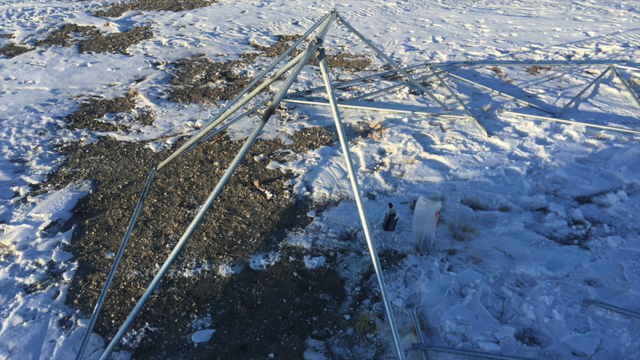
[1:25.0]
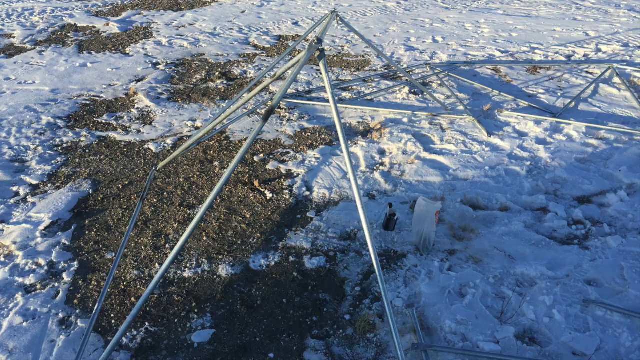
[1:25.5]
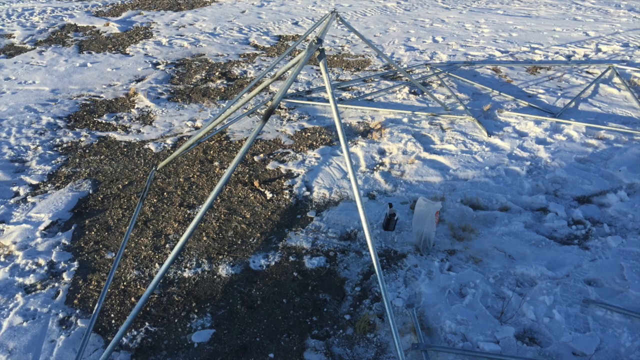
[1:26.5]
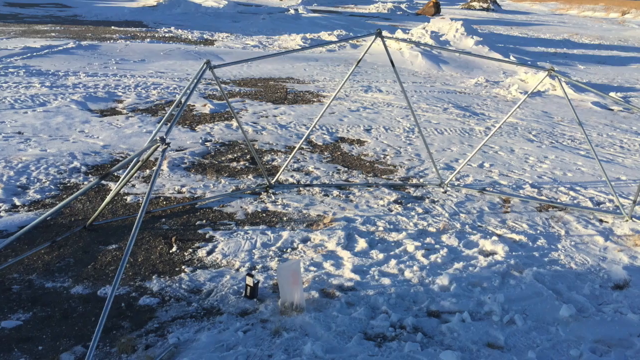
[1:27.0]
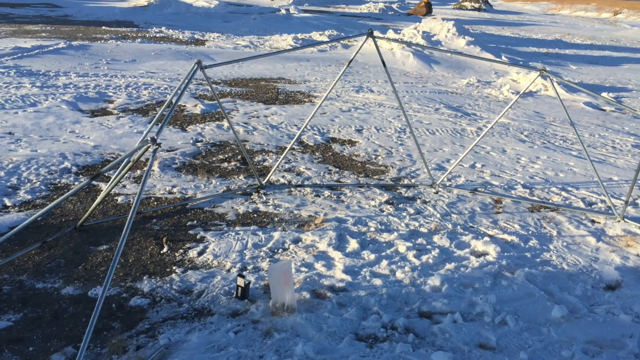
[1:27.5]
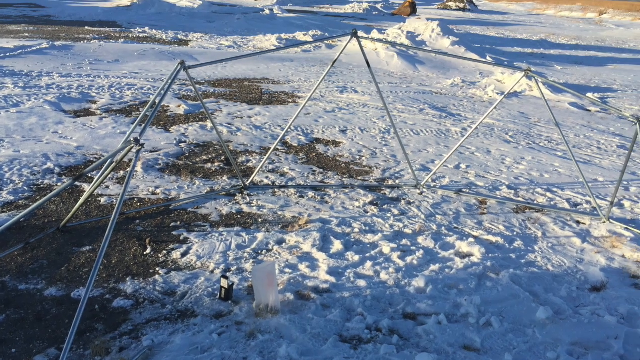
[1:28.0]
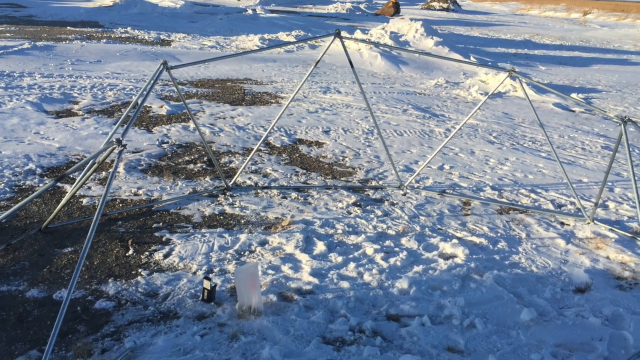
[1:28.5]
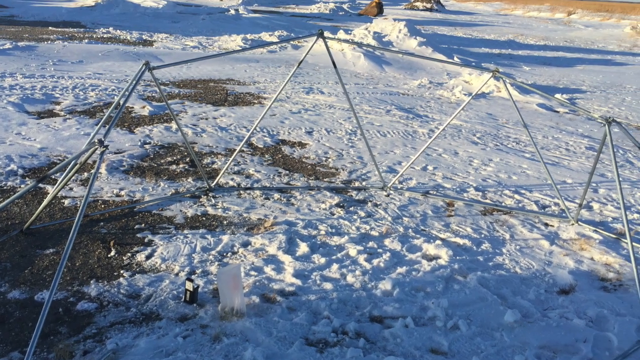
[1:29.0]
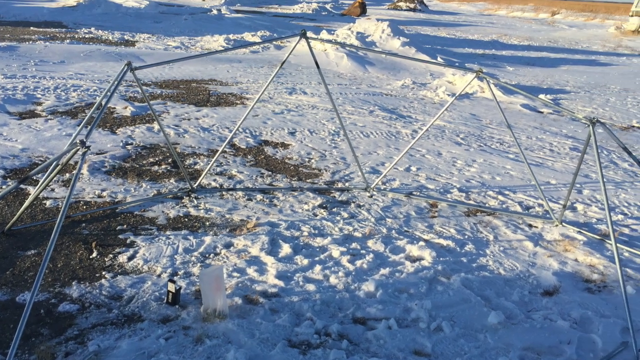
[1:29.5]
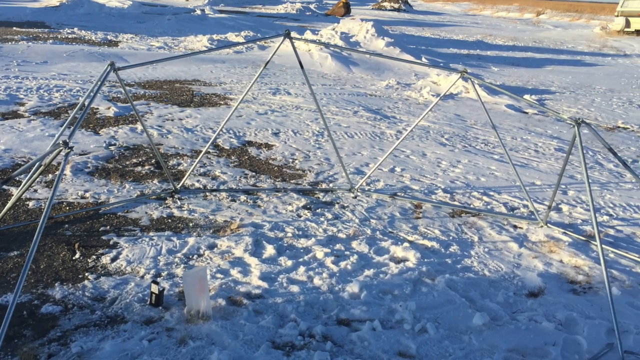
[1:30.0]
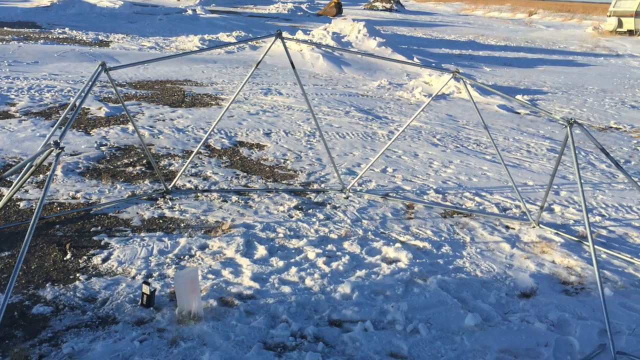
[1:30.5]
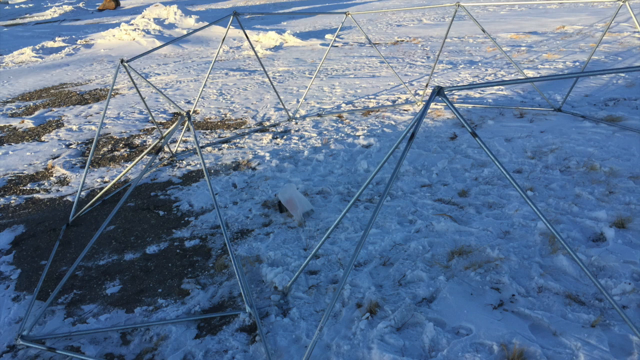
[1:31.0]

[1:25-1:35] The sides of the structure are starting to come together and are standing up. There is snow on the ground and it looks very cold outside; the time of day is unclear, possibly morning or evening. The poles are being attached to each other, slowly assembling the structure, which could be playground equipment or possibly a greenhouse. Boot prints in the snow indicate multiple people have been working on it.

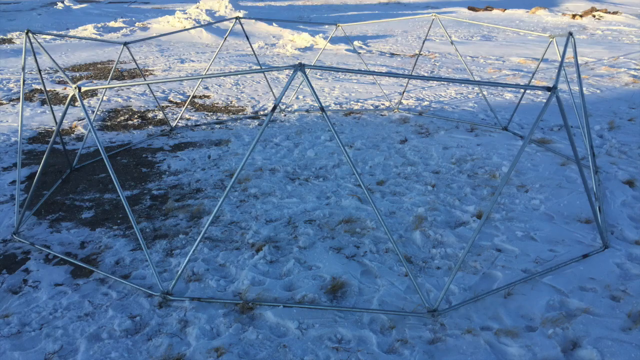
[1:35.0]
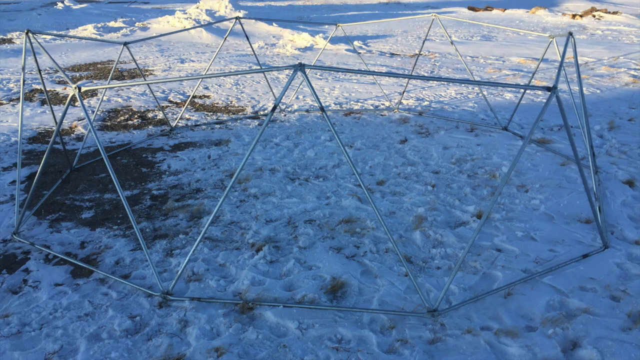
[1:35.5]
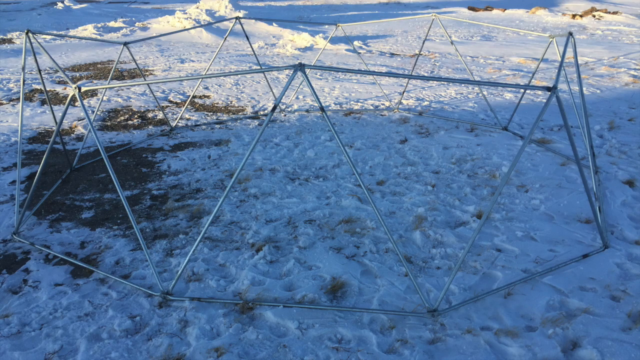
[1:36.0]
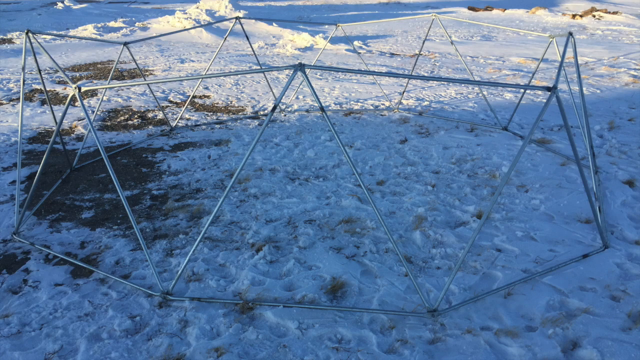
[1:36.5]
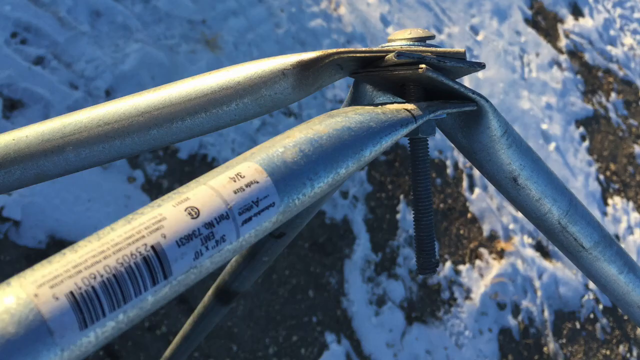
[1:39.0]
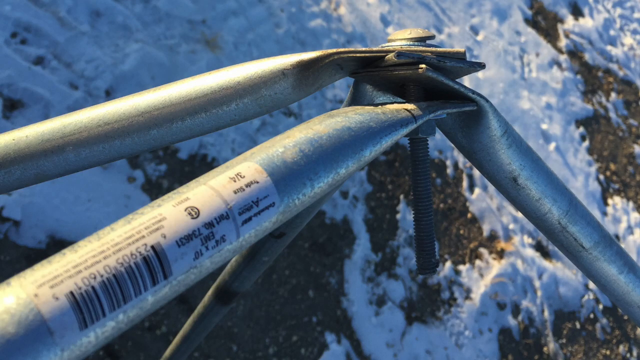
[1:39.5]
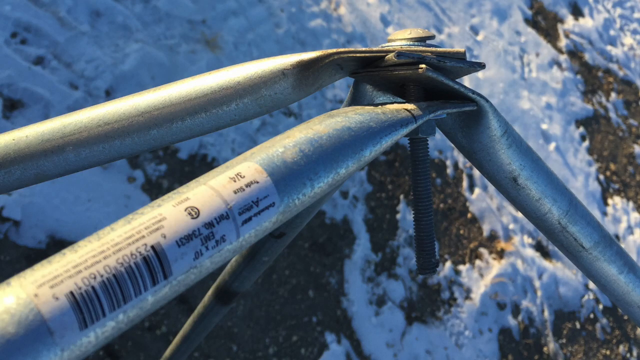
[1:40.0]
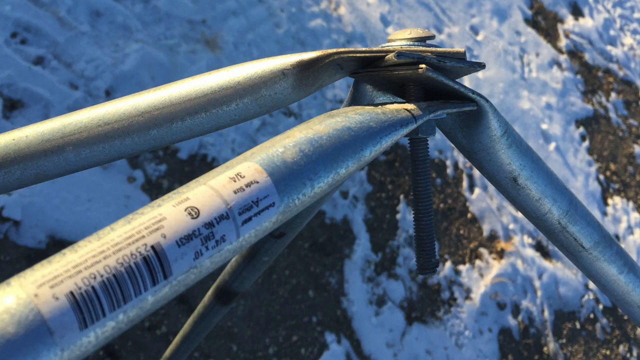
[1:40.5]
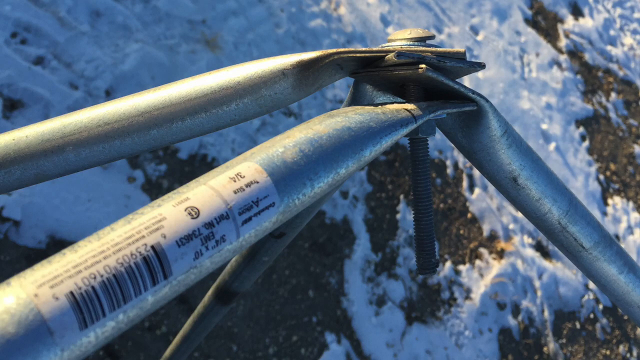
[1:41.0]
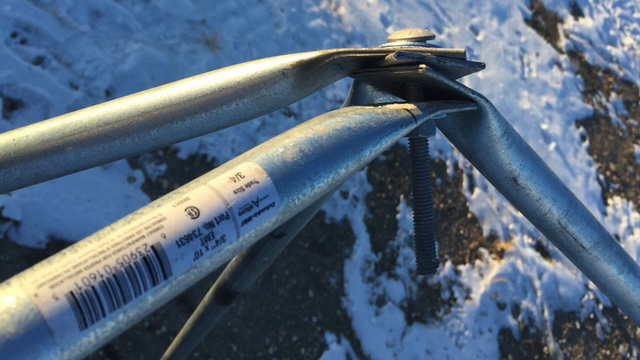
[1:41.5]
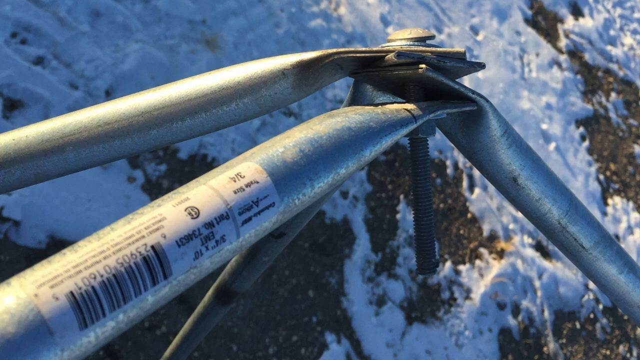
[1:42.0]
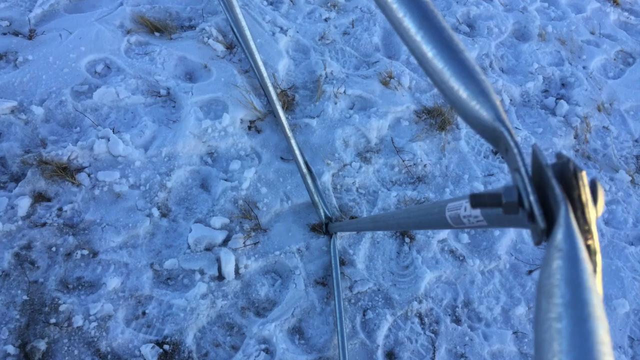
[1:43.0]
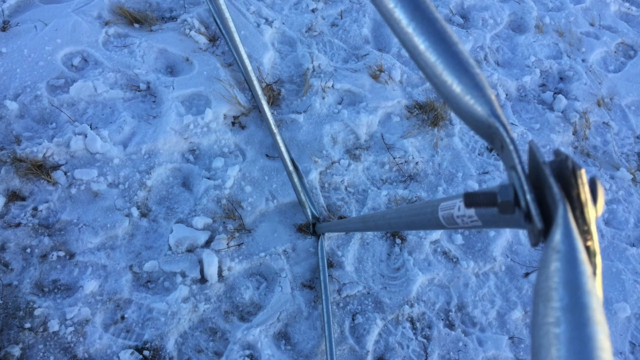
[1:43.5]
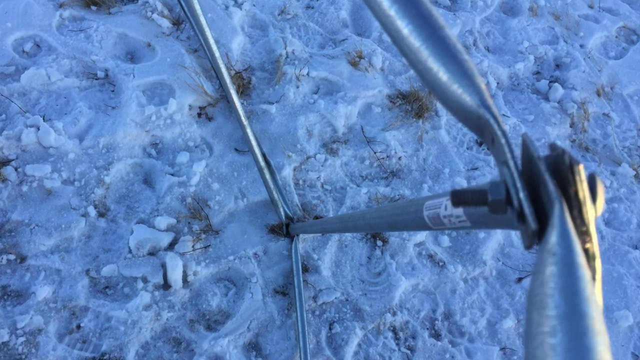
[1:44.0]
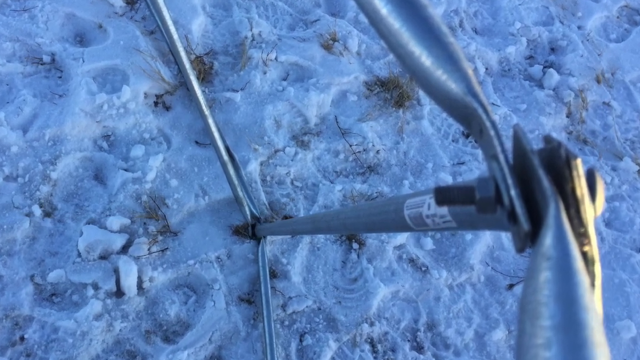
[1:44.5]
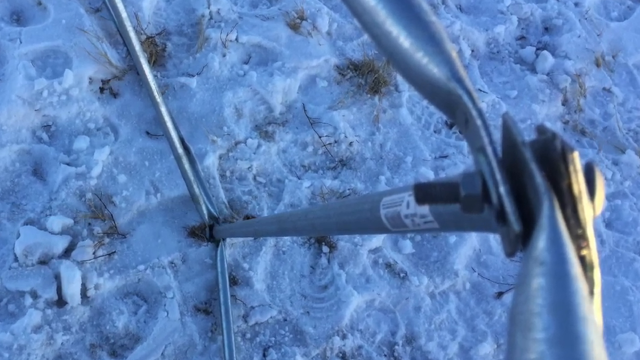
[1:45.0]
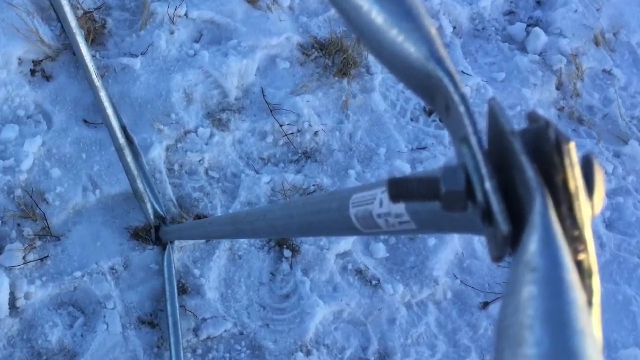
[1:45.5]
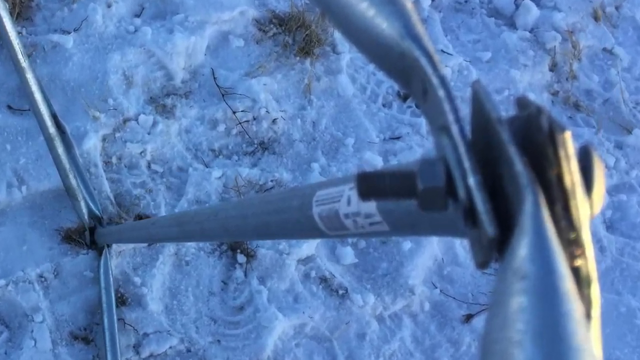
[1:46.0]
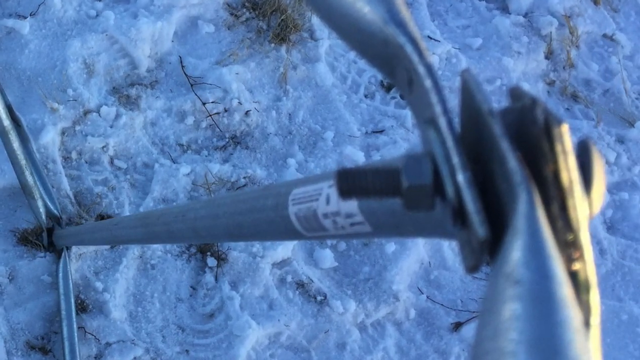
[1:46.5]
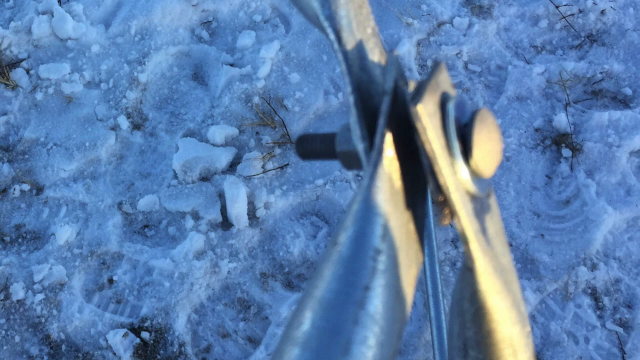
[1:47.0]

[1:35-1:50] All sides of the structure are now standing, with the metal poles connected. Several are joined at each joint; the ends of the poles are kind of flattened with holes so three can be put together with one bolt. It looks like it is getting less sunny than before, apparently later in the evening. Footprints are visible in the snow.